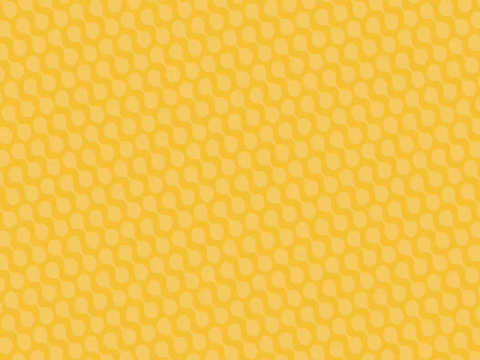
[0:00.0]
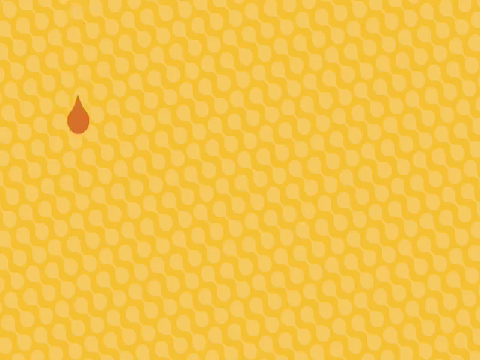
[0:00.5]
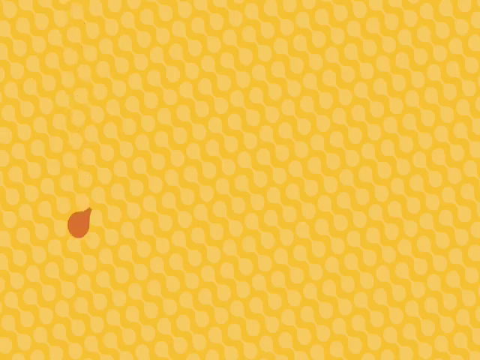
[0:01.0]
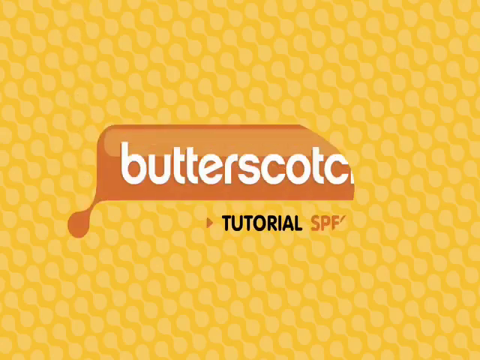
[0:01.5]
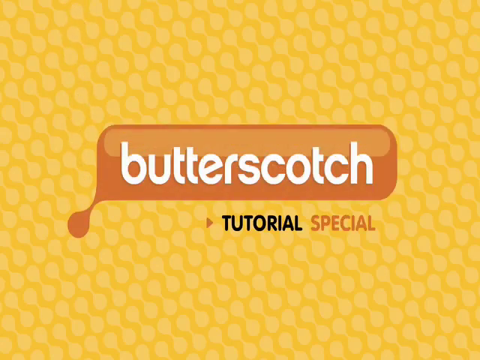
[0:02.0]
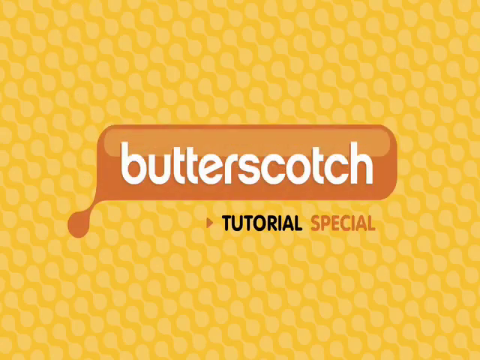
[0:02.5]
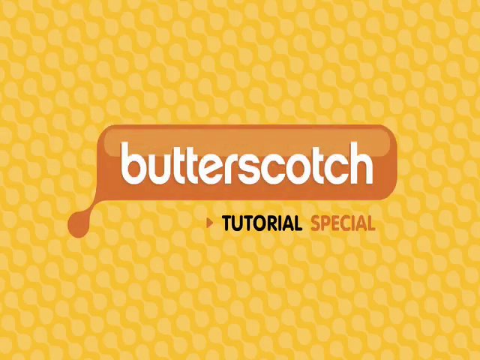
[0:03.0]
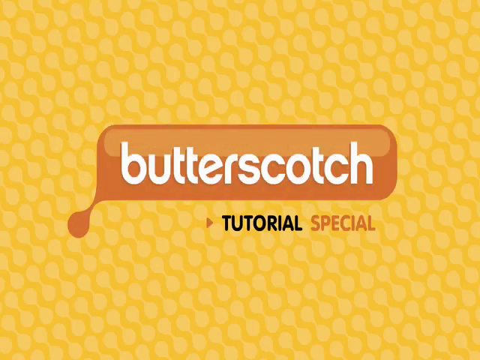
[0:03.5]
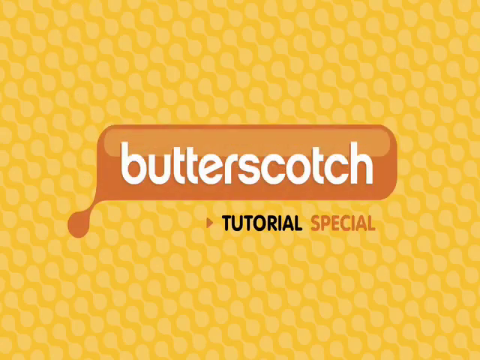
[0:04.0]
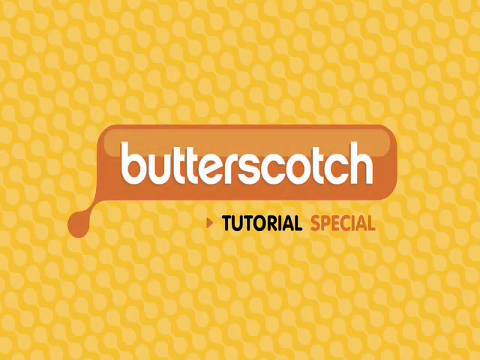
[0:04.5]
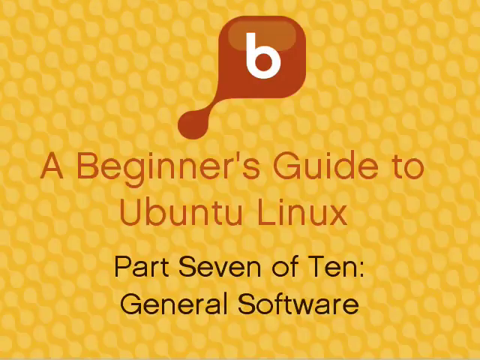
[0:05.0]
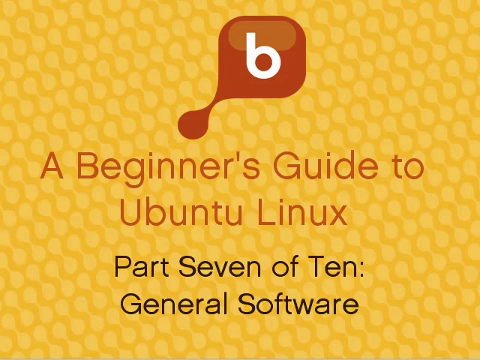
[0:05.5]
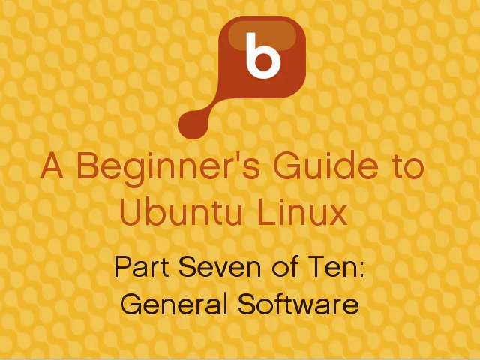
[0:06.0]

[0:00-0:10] Text appearing to read "butterscotch" is shown over what looks like a honeycomb pattern in the background. The video is titled "A Beginner's Guide to Ubuntu Linux", part 7 of 10, general software. A blank honeycomb-type screen appears; there is a drop, then "butterscotch tutorial" and the title appear.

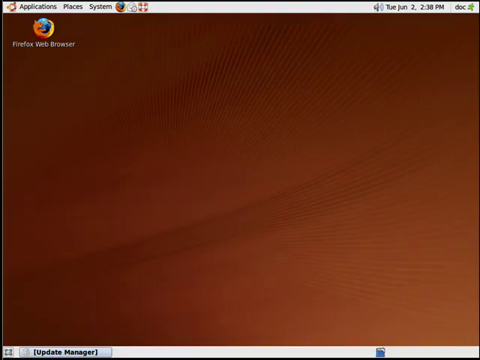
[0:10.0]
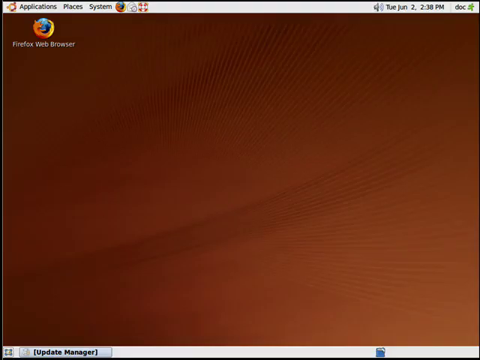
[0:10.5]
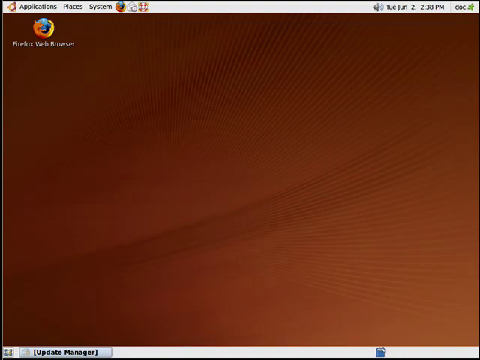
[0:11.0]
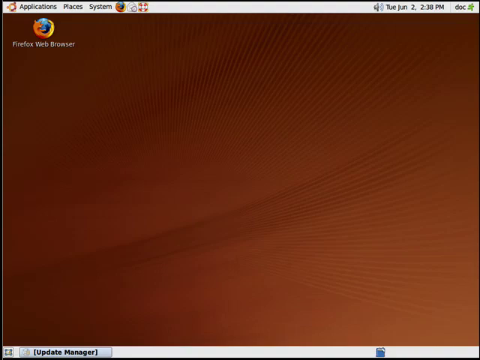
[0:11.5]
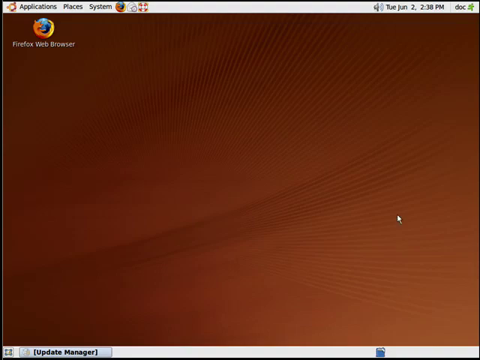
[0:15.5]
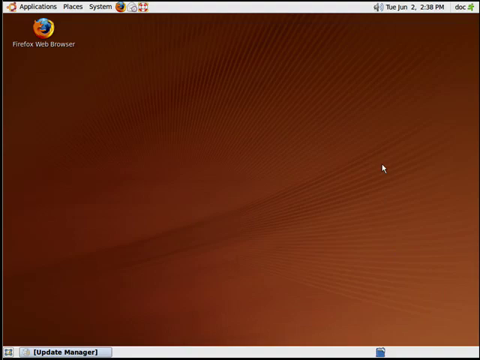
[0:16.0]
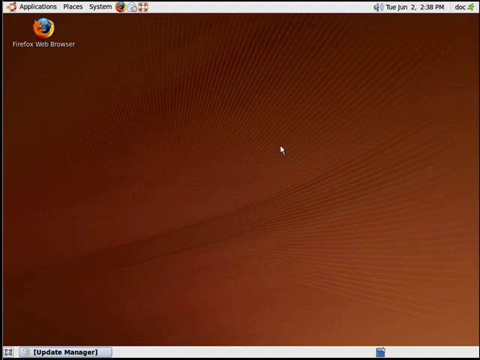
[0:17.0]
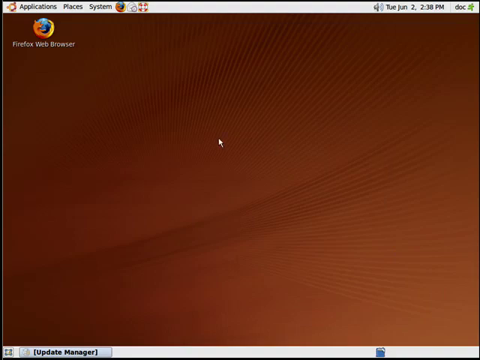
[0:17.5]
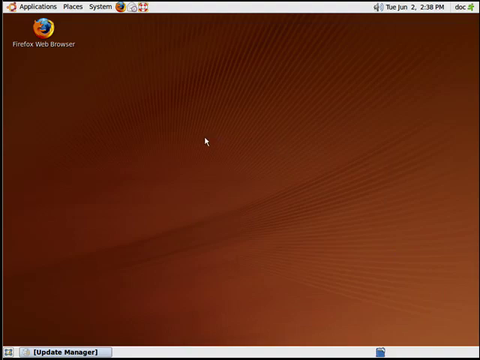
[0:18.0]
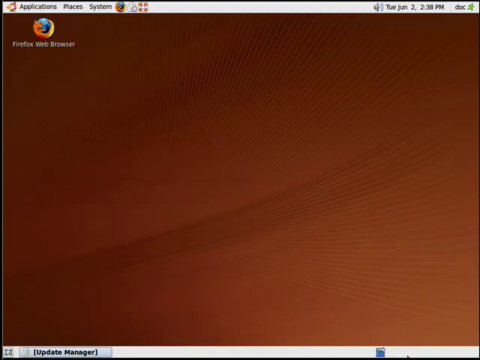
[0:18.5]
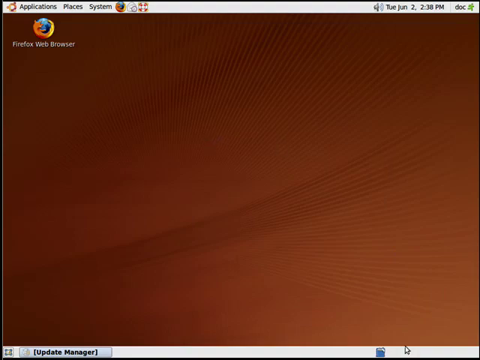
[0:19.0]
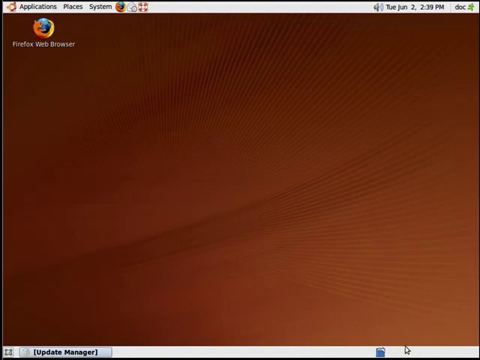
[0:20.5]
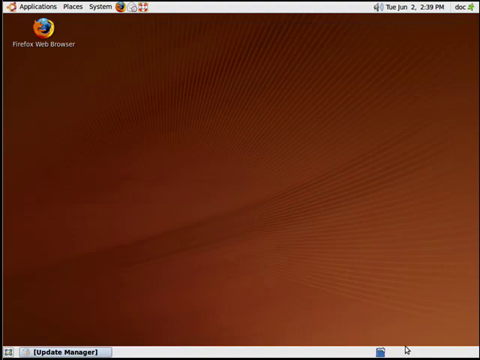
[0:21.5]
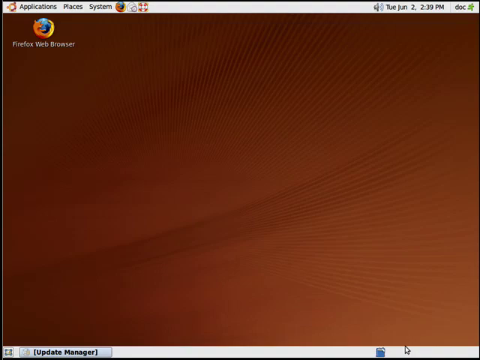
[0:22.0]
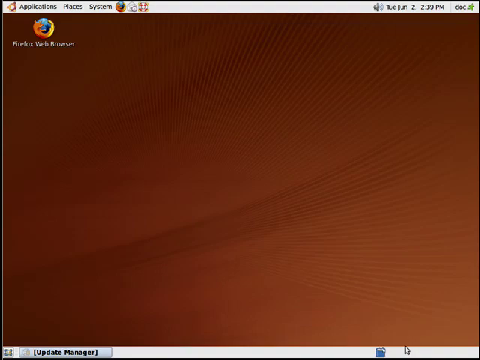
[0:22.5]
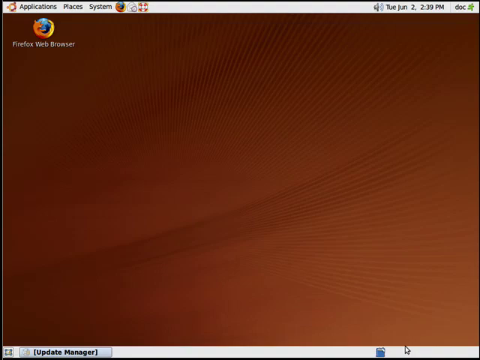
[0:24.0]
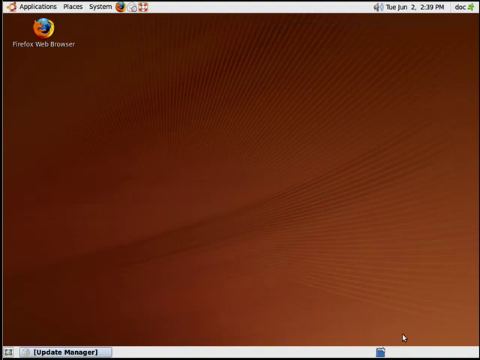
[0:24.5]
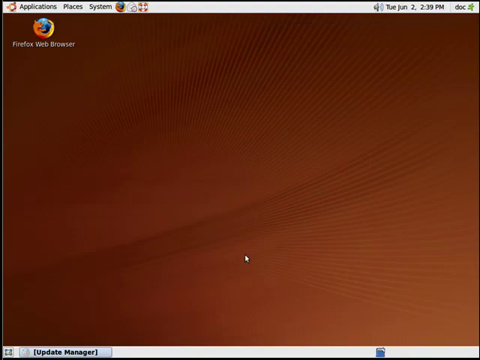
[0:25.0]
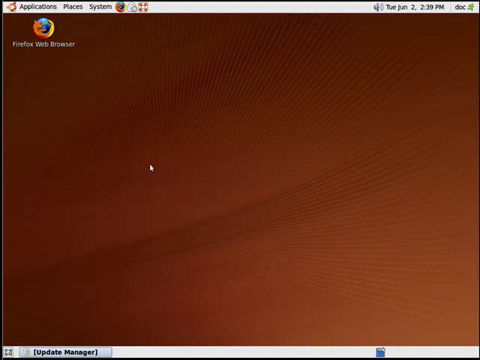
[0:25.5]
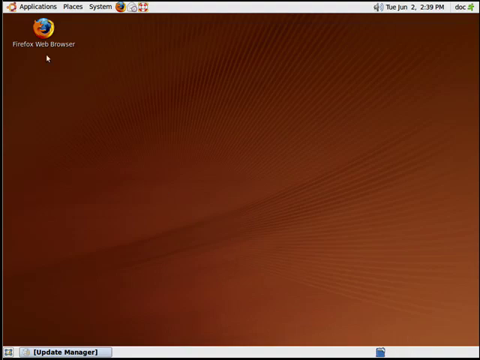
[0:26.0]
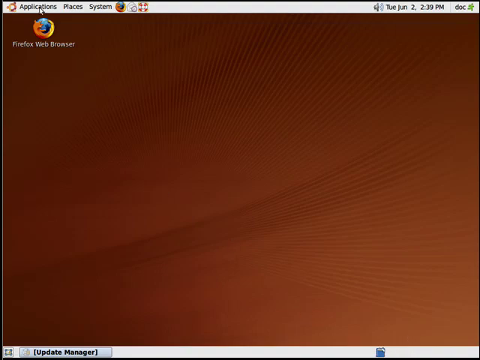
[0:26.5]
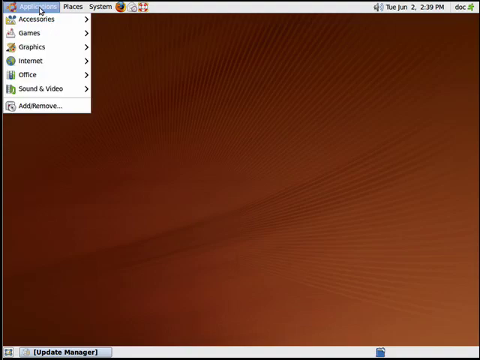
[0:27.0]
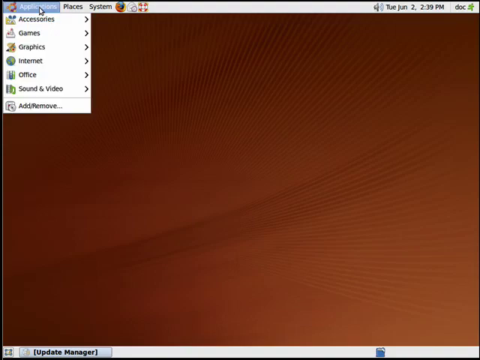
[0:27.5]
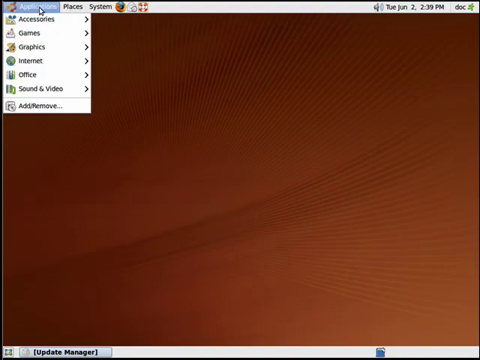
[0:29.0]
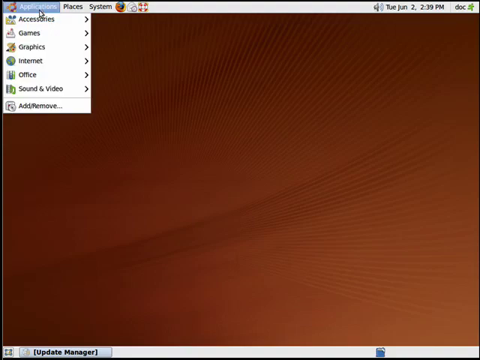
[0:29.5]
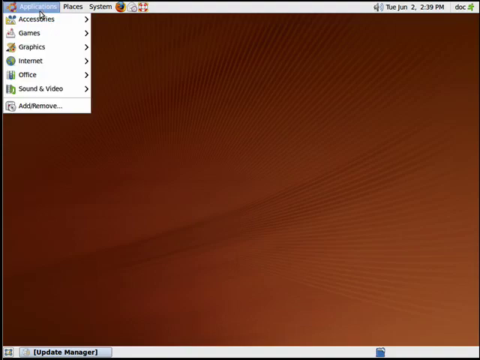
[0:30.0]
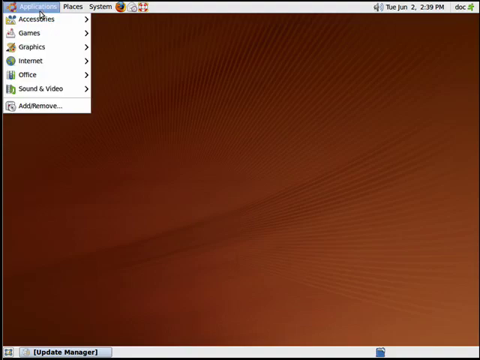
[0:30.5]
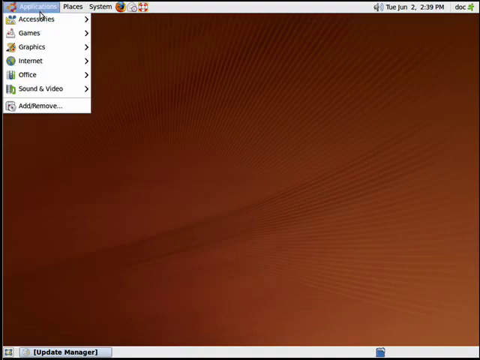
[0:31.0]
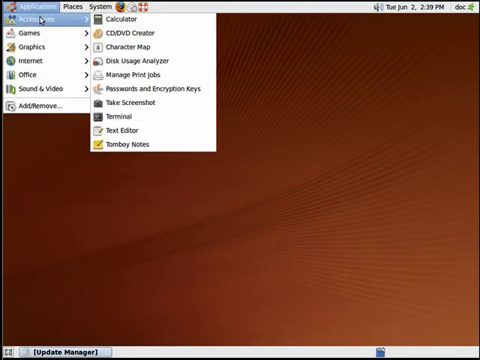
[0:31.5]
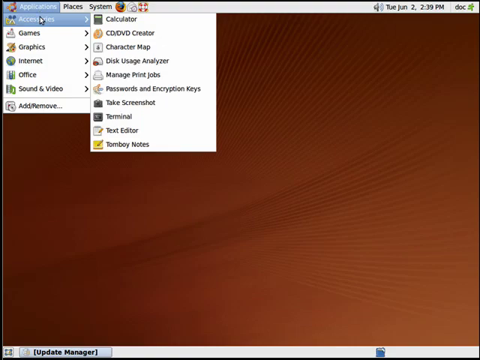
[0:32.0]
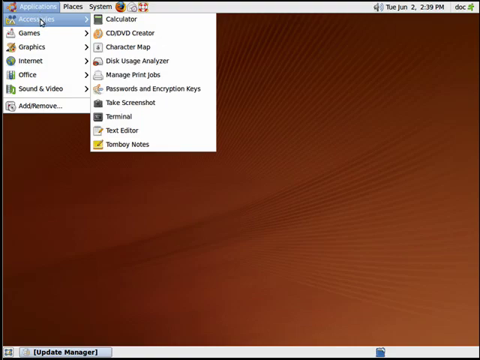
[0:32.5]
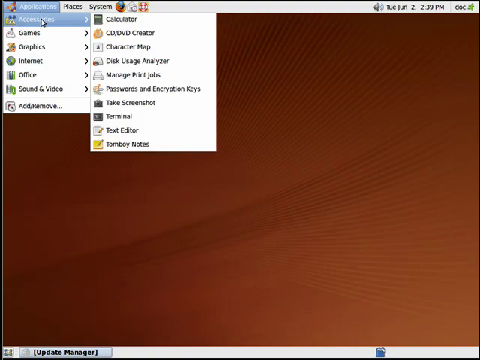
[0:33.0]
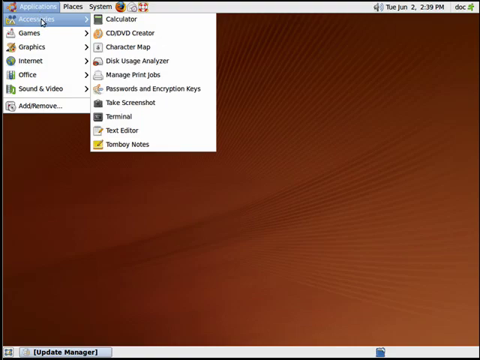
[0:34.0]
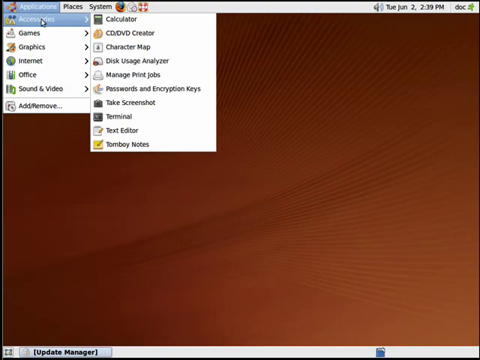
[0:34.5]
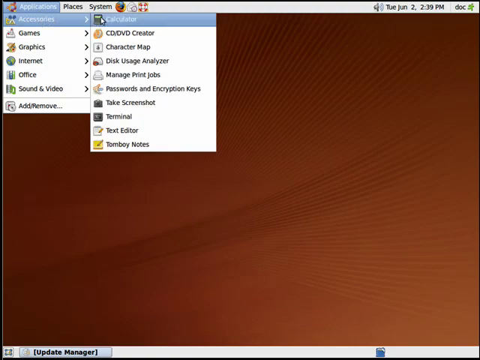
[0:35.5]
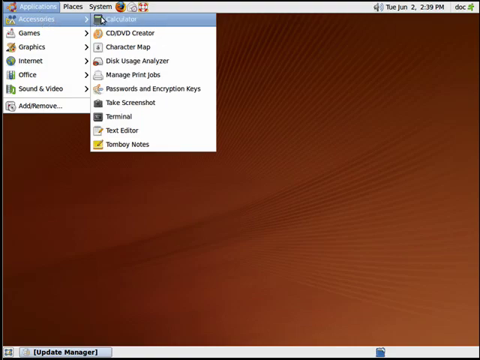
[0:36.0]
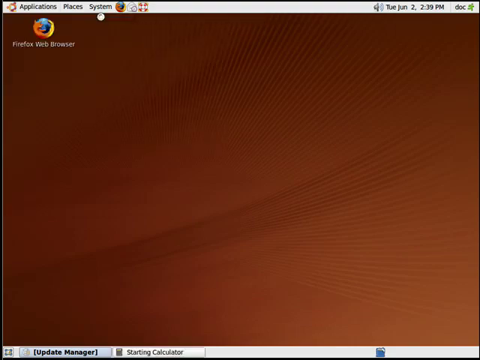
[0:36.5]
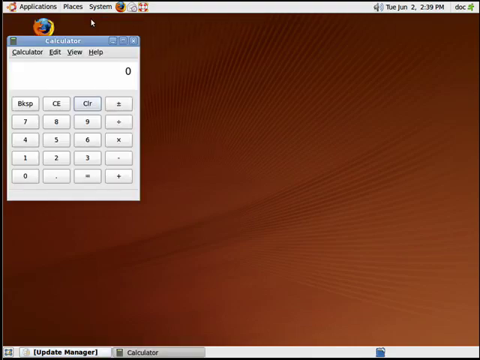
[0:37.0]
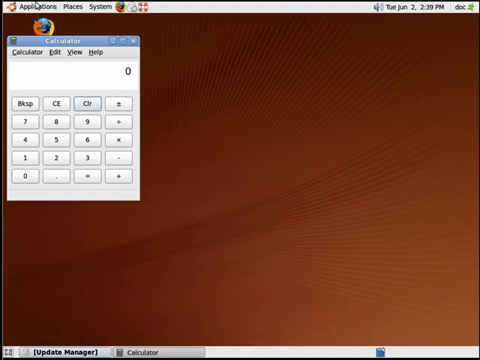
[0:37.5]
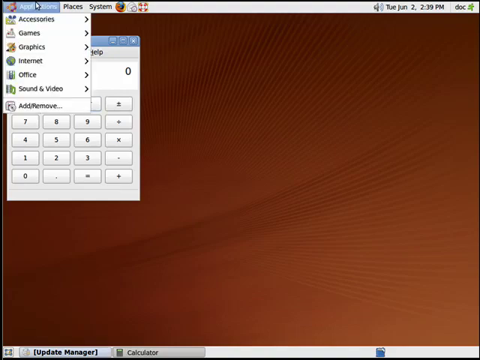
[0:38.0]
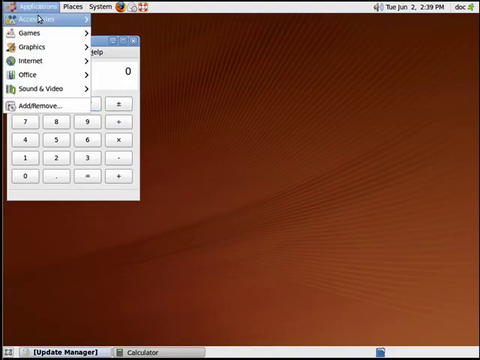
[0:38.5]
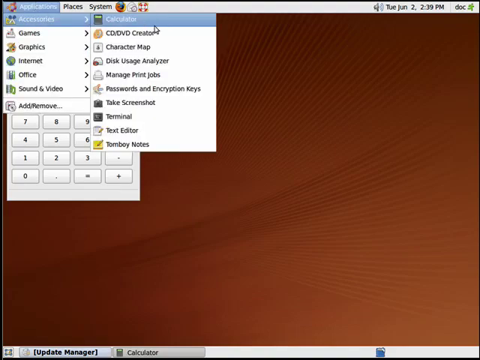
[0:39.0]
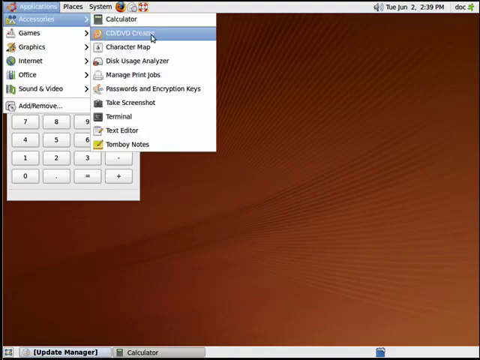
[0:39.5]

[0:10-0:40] The title reads "butterscotch tutorial", "a beginner's guide to Ubuntu Linux", part 7 of 10, general software. The first picture is a computer desktop whose background has many brown waves in the sky, almost like a solar flare, in a sort of rust color. The only icon on the desktop is one labeled "Firefox web browser". A white arrow cursor moves up to the top of the screen, briefly disappears, comes back down, and goes to Applications at the very top. It opens a drop-down to Accessories and then to Calculator, and then a second window of something opens, though what it is cannot be seen.